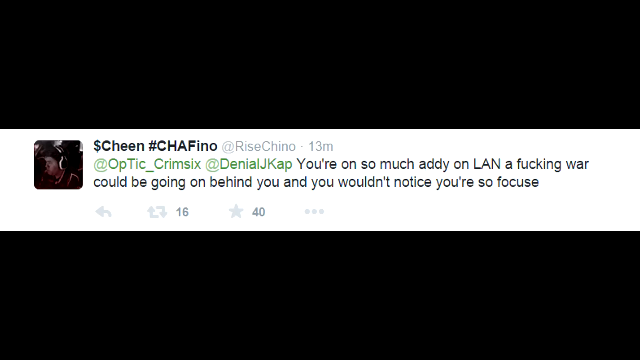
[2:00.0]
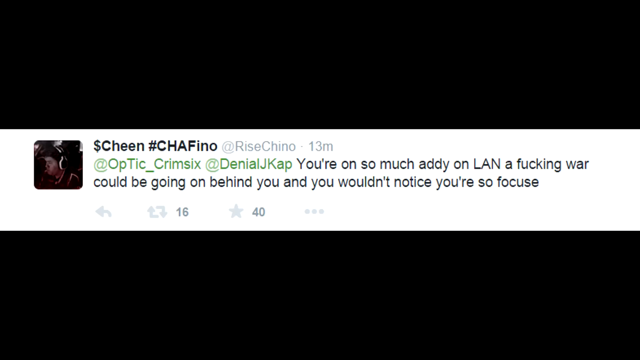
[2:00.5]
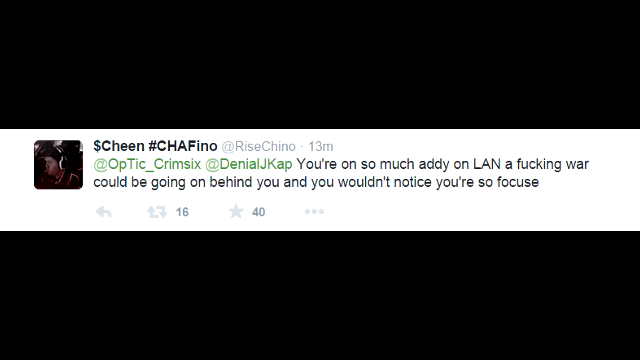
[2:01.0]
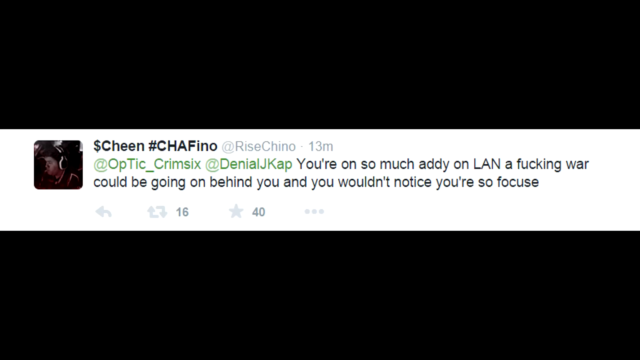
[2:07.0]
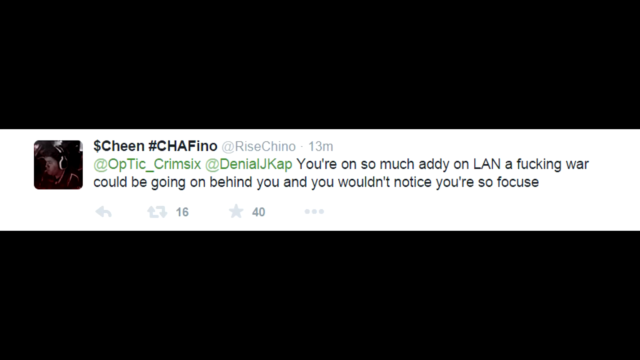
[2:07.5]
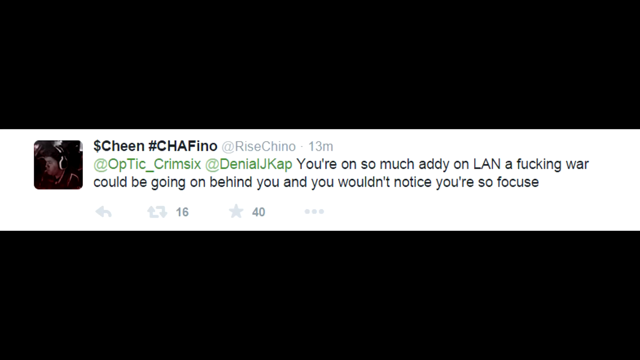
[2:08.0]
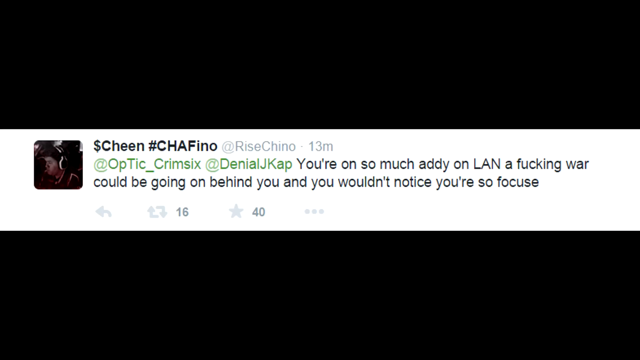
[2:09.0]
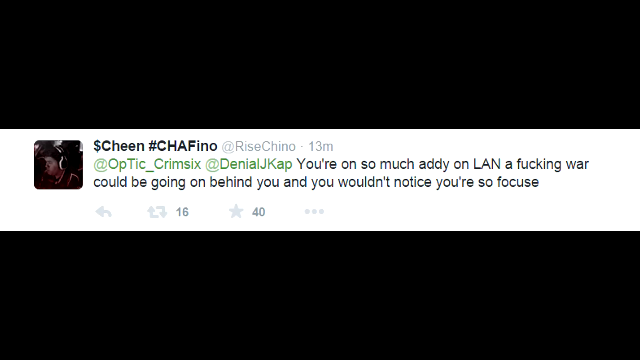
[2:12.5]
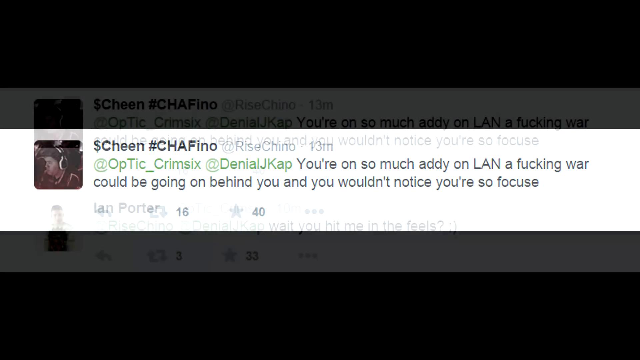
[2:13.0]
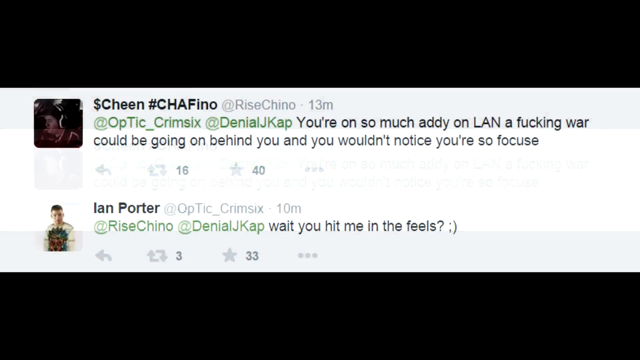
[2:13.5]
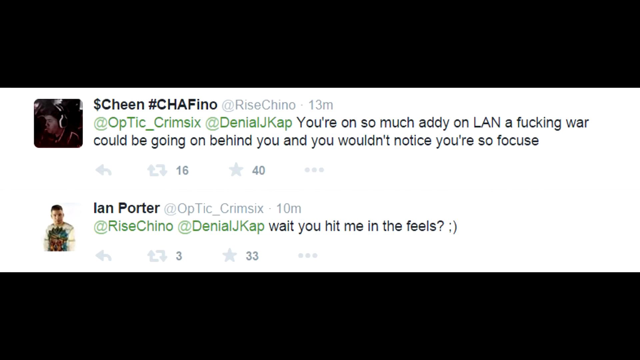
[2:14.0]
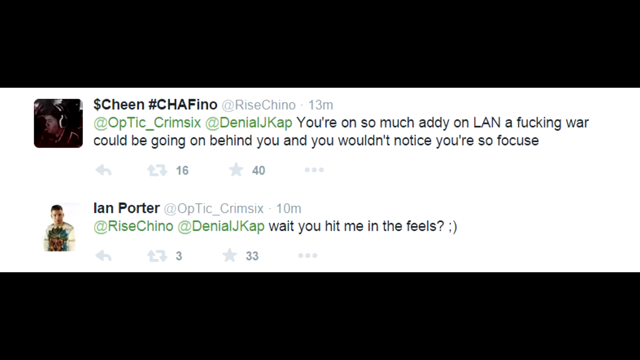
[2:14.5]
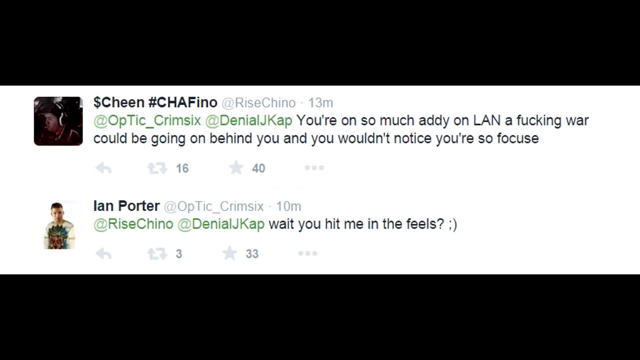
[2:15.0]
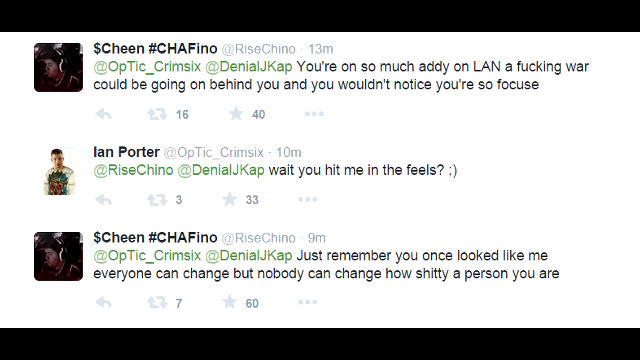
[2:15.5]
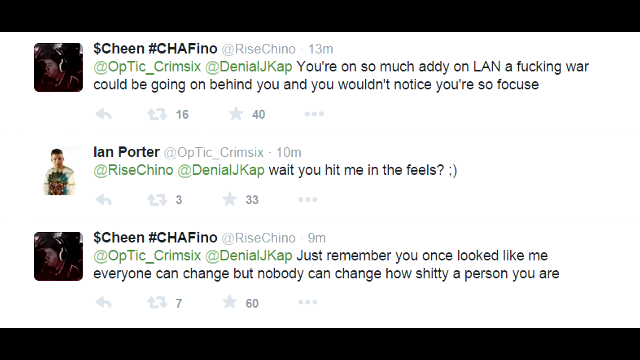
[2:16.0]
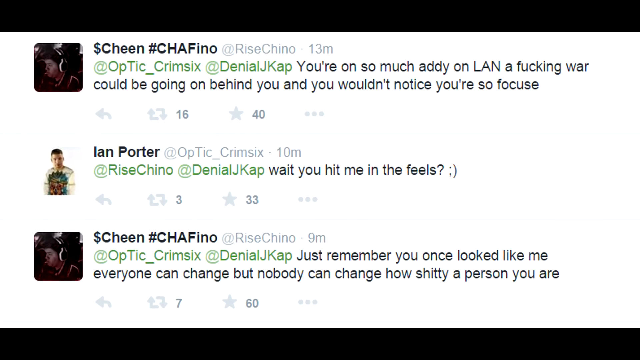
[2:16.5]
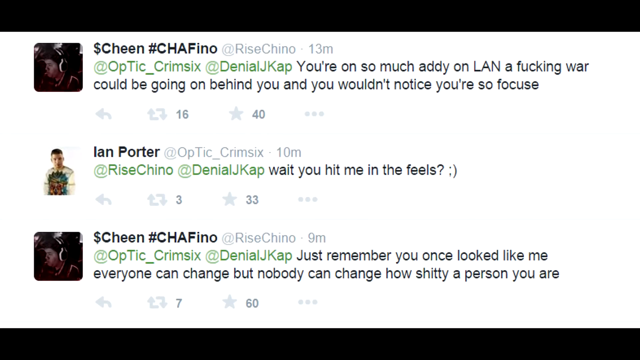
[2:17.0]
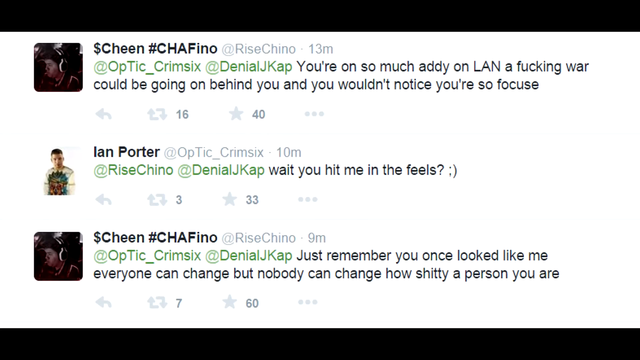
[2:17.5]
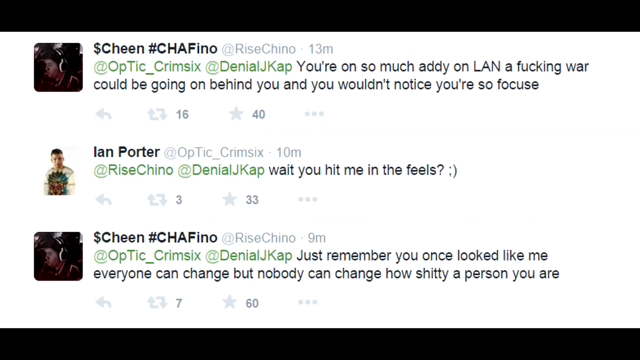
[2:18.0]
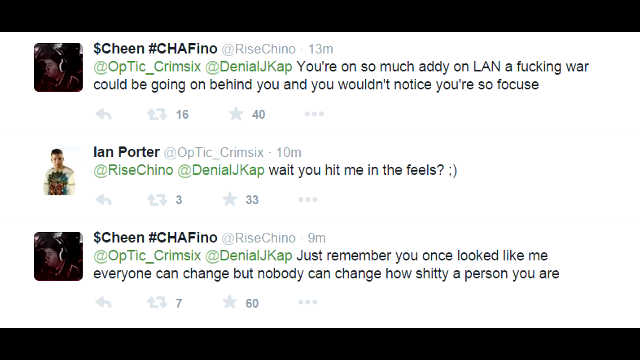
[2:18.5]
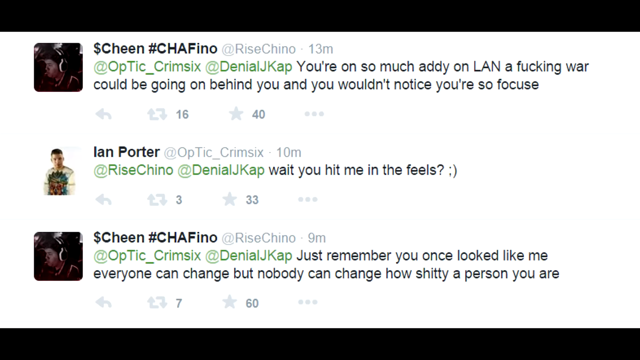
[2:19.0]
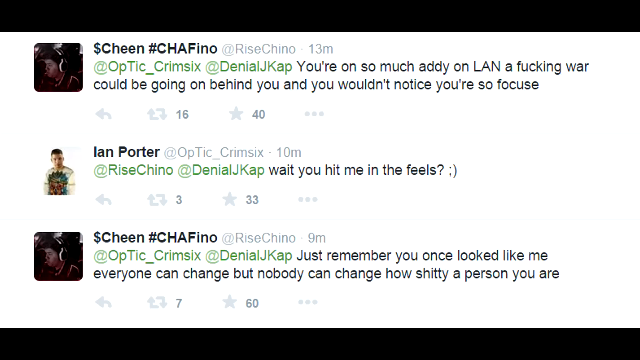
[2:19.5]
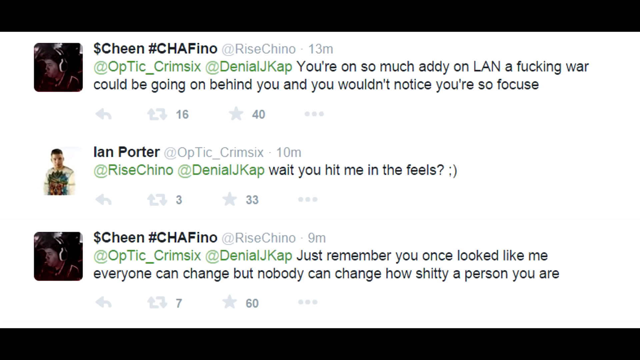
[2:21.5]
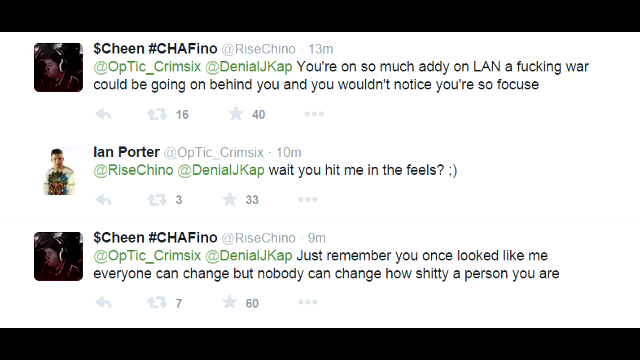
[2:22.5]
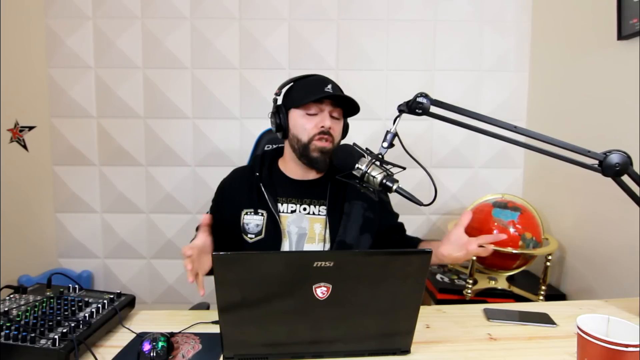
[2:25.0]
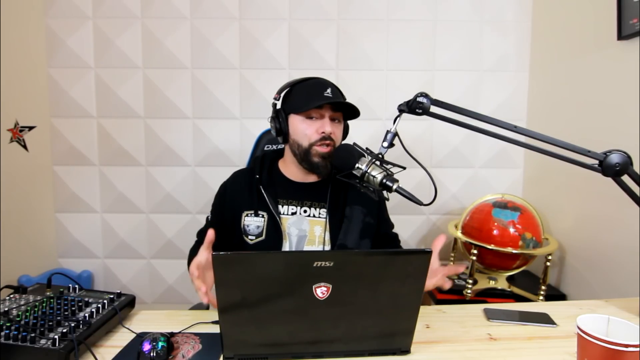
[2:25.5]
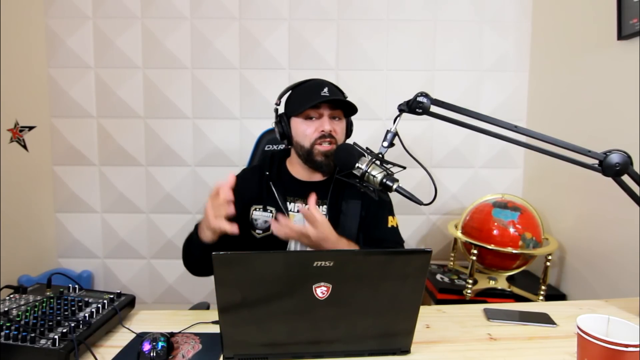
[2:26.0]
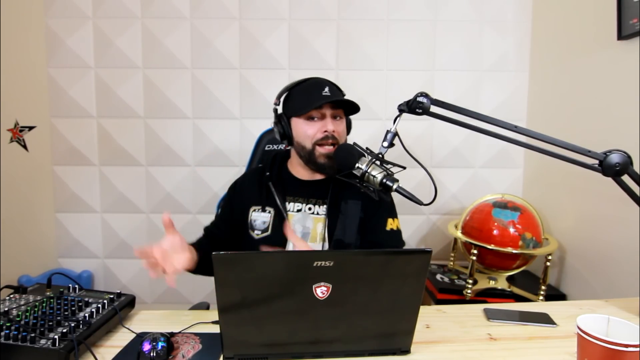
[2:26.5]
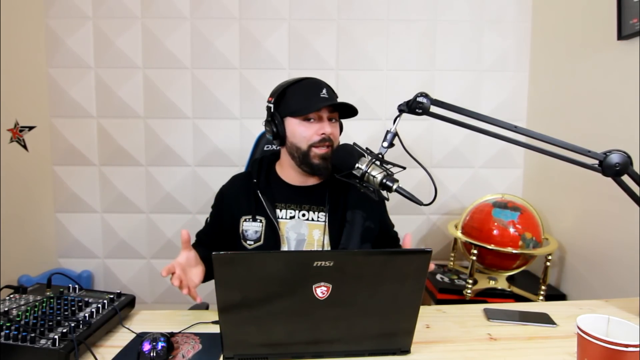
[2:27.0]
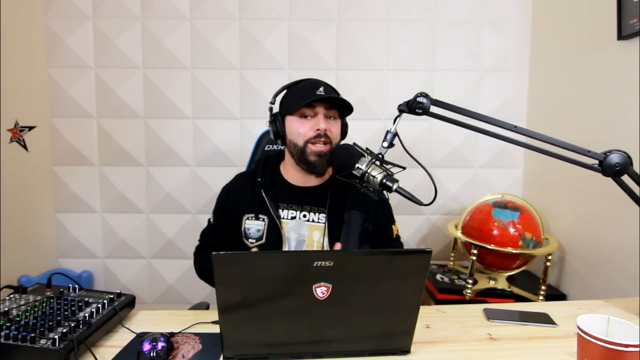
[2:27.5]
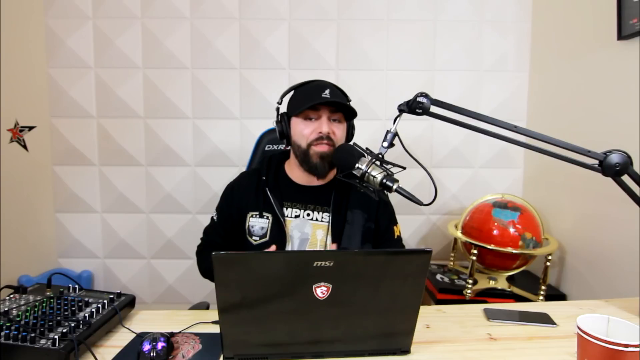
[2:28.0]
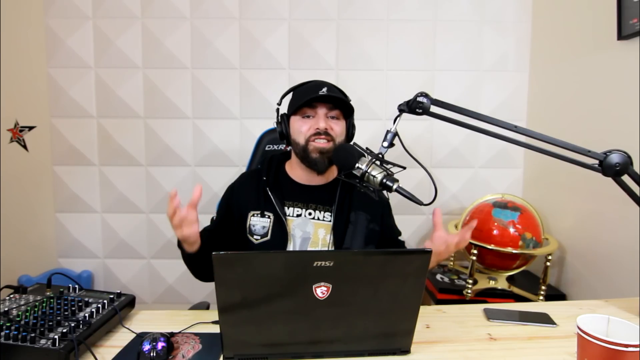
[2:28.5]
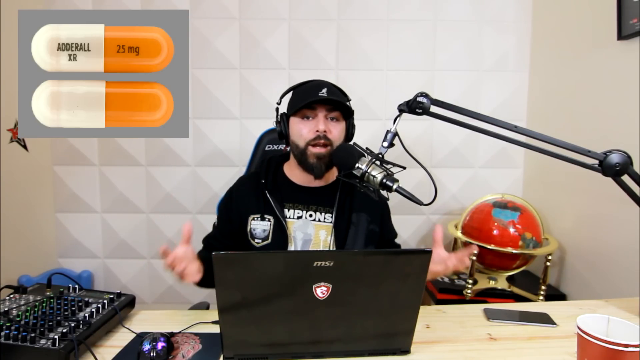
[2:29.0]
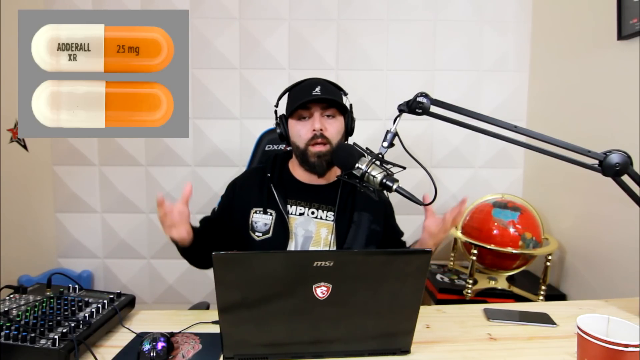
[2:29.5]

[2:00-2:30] A screenshot of a comment from the user named Cheen, addressed to a couple of the other commenters, reads "you're on so much addy on LAN a fucking war could be going on behind you and you wouldn't notice you're so focused". Likes and a share button are underneath the screenshot. It stays on screen for a bit, and then other users' responses appear: Ian Porter says "wait, you hit me in the fields", and Cheen replies "just remember you once looked like me, everyone can change, but nobody can change how shitty a person you are". The @ names are in green, while the rest of the conversation is in black. The video then moves to the man talking into the microphone to his viewers.